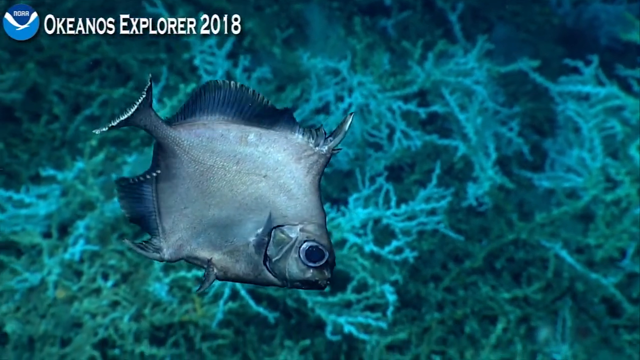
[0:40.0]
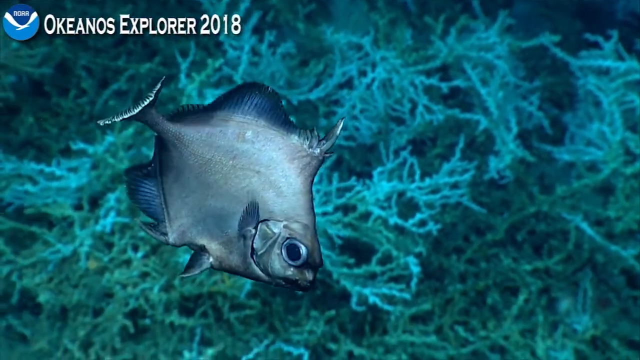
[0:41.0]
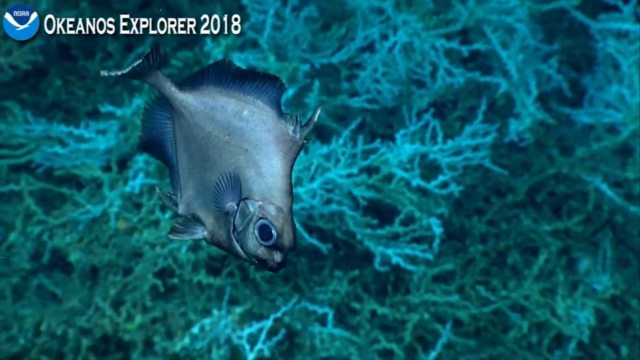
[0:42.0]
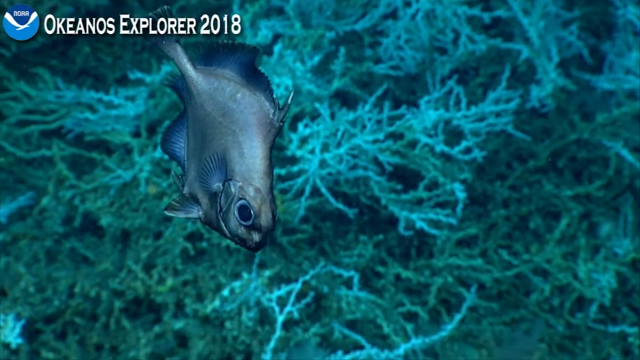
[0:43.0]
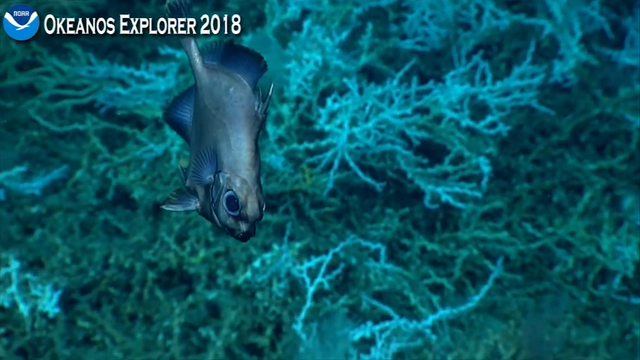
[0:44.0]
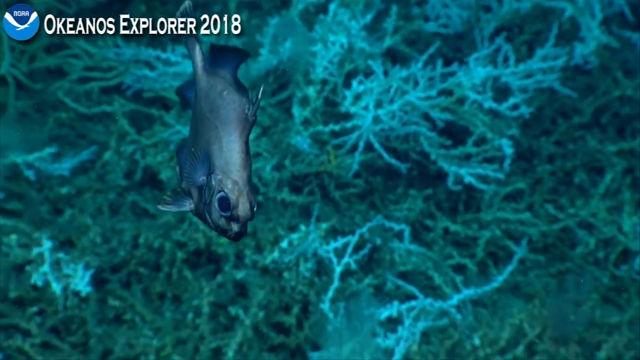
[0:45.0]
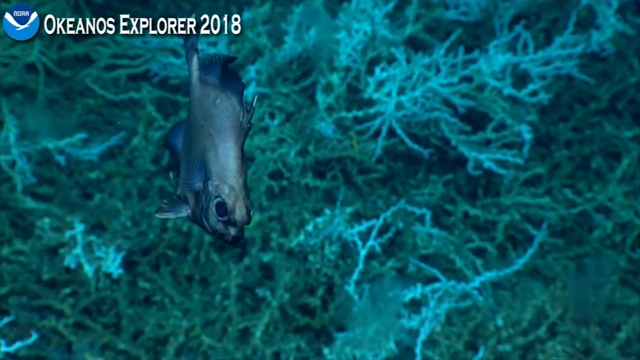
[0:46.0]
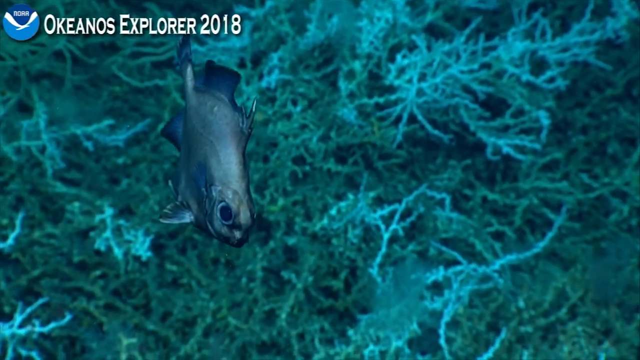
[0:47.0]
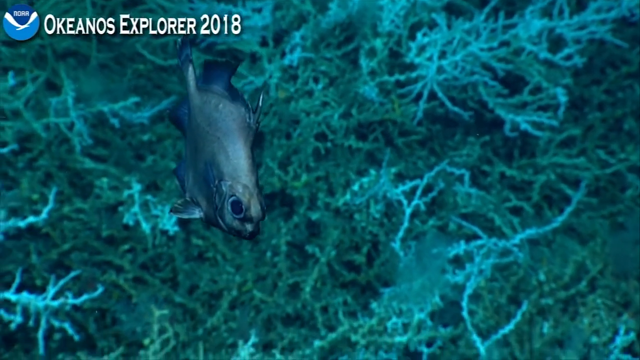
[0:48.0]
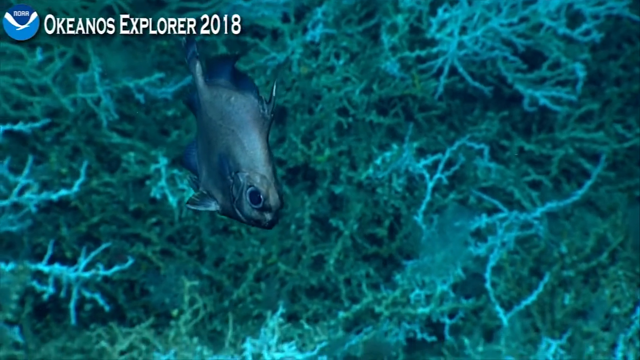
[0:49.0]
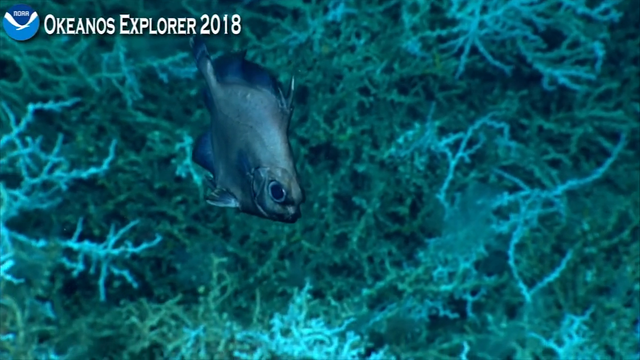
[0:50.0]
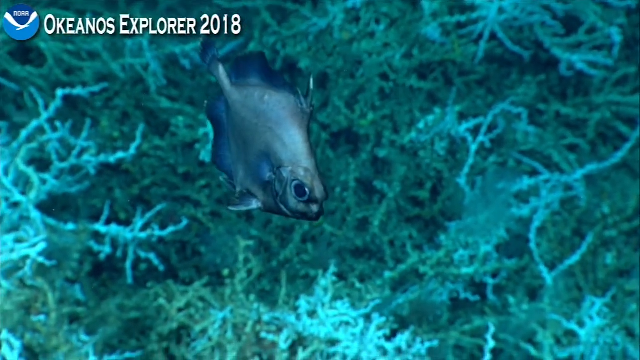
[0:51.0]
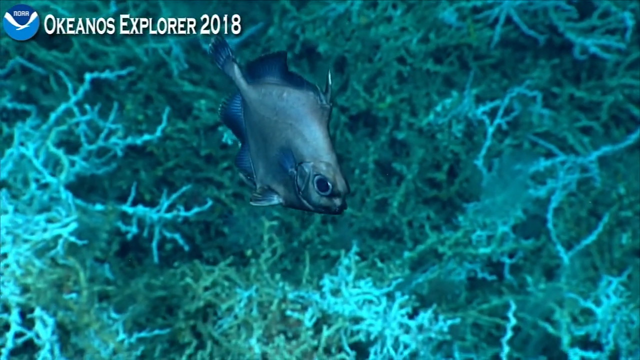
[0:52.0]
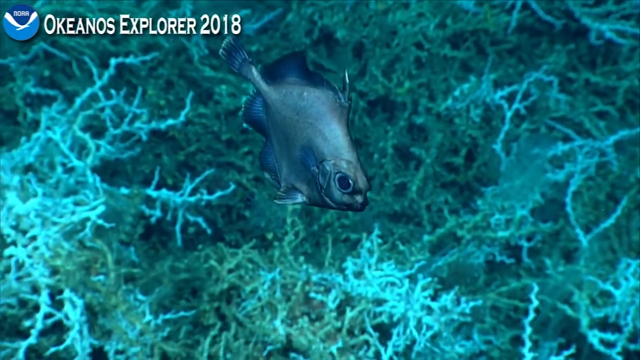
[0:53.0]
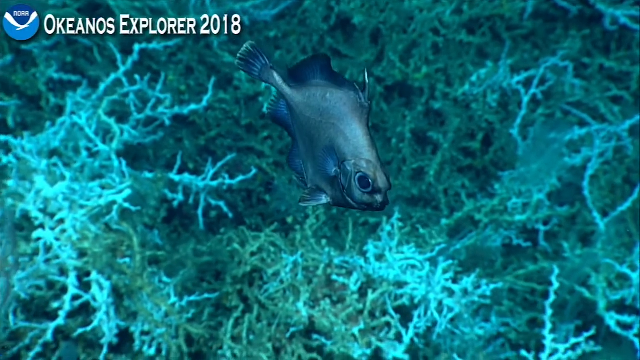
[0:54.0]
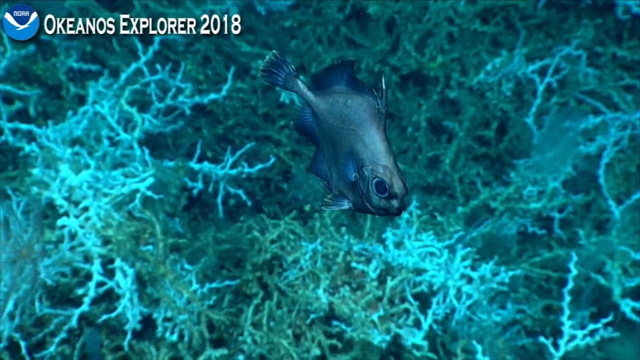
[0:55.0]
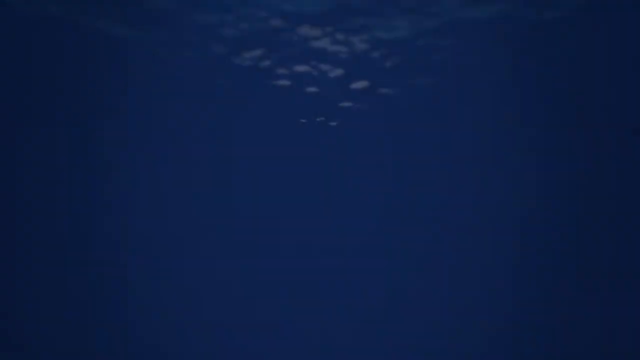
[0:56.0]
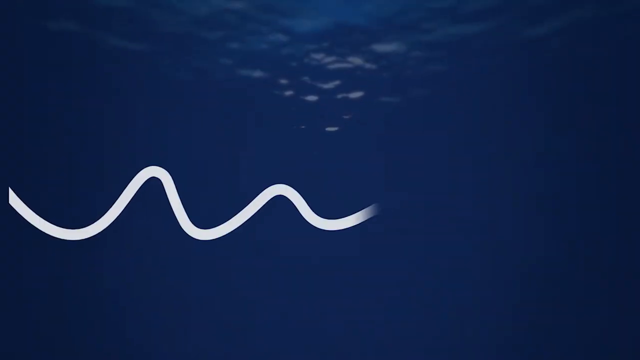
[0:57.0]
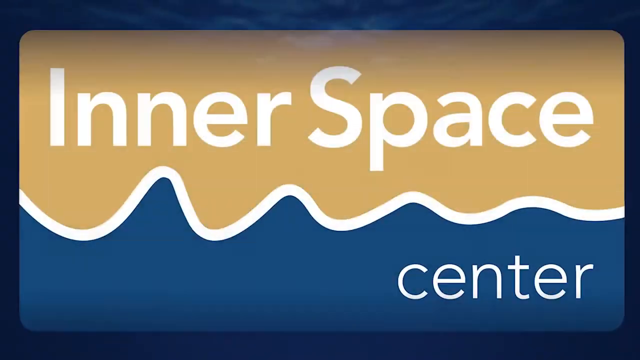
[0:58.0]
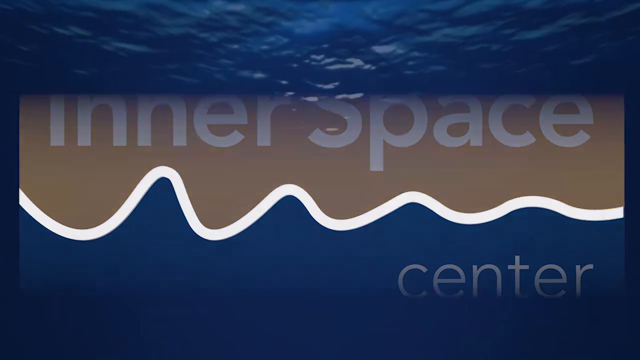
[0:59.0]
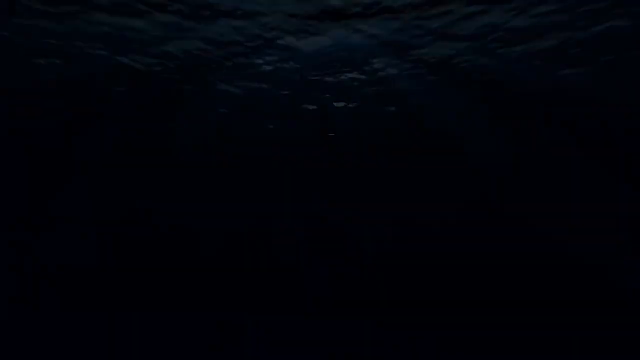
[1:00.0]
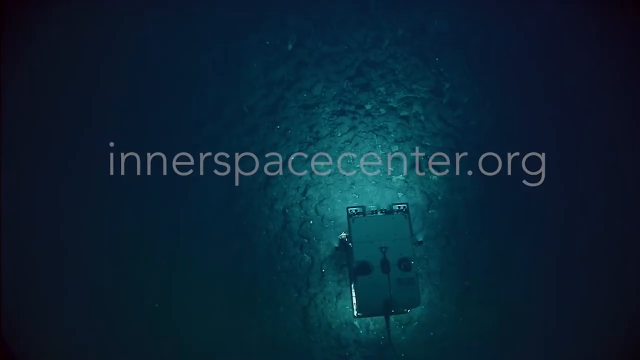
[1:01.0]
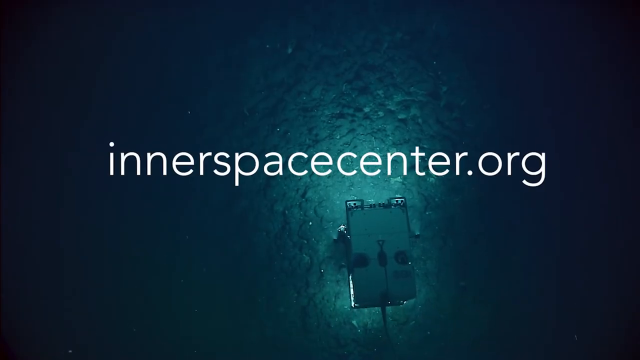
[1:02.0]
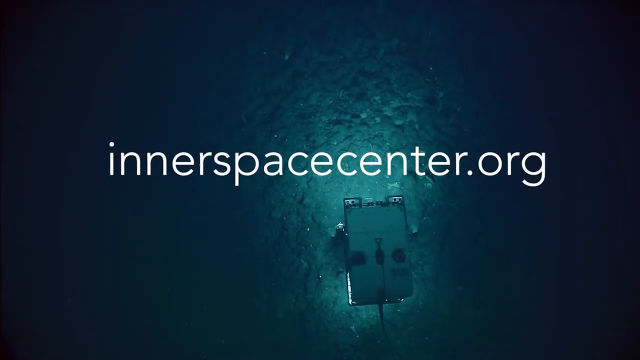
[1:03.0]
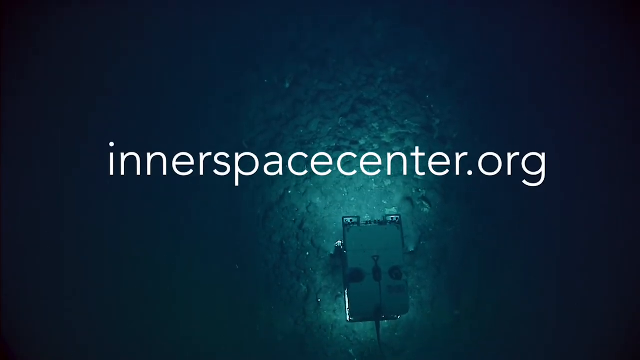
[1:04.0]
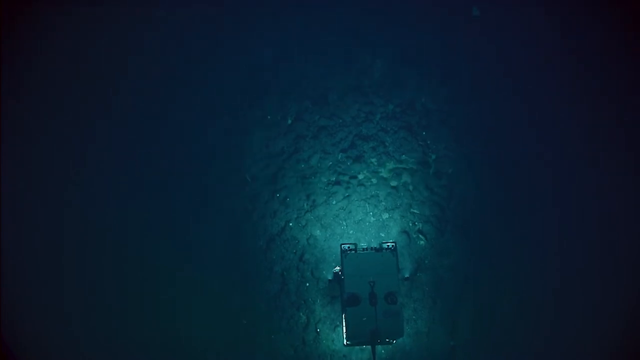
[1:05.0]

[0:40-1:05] An underwater close-up shows the gray fish with blue fins floating slowly in place. It has a large, broad, flat, vertical body and a large bluish-gray eye staring at the camera. In the background is a coral reef with vegetation, and the area is illuminated by a light cast from behind the camera. In the top left of the screen is a bluish-white seagull logo, and next to it, in white lettering, "Okeanos Explorer 2018." The fish, in the center left of the screen, looks toward the camera, then slowly rotates to its right, looking off to the left, and then lines itself up more directly with the camera. A spine shoots out of the top of the fish, and it moves its fins on the back part of its body to keep itself floating in place as it moves around. It then slowly floats to the right while the camera floats along, tracking it, with the vegetation and coral reef in the background passing behind the fish. The whole scene has a light, greenish-blue hue, with the area underneath the fish illuminated. The scene then transitions to dark water looking up toward the surface. An illustration of white waves appears in the center of the screen and expands into a larger logo: above the white wave lines is an orange square with white lettering reading "Inner Space," and beneath the white line, in the water, white lettering reads "Center." The logo flashes on the screen and then fades away toward the center. The screen transitions to black, then to another underwater scene in which the outer edge of the screen is dark blue and black while the center is illuminated in a green hue. A submersible vehicle illuminates the seabed floor beneath it, and white lettering over the center of the screen reads "Inner Space Center.org." The scene then ends.